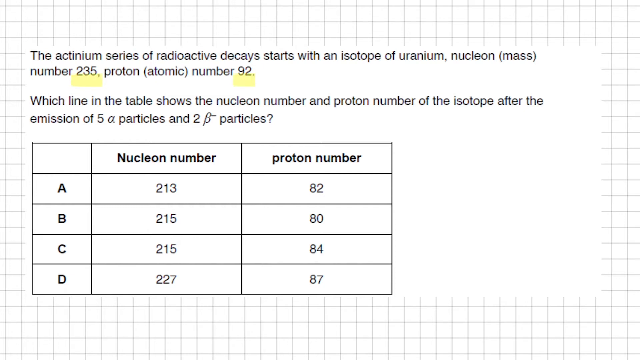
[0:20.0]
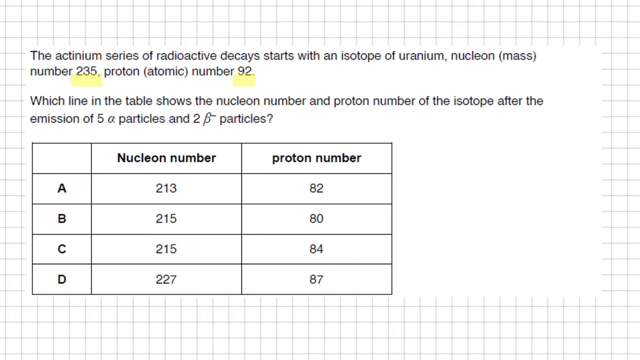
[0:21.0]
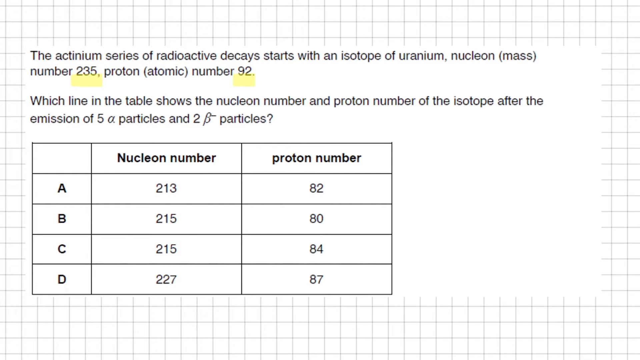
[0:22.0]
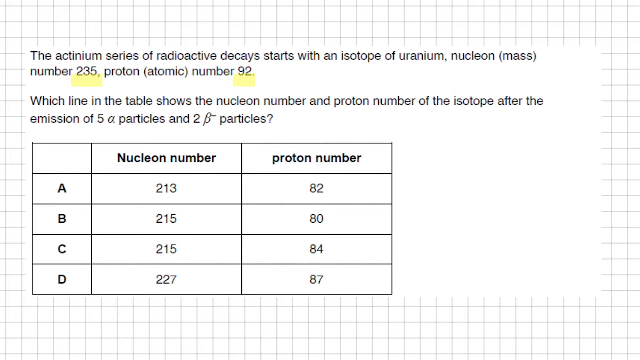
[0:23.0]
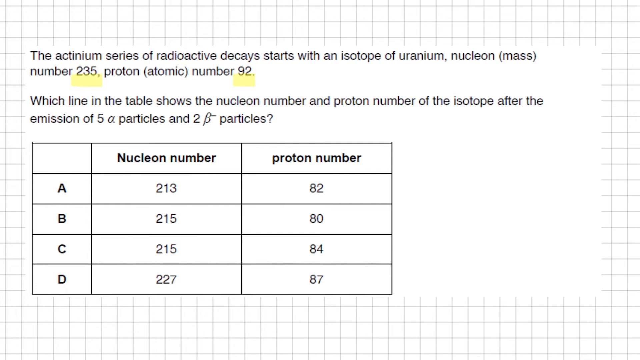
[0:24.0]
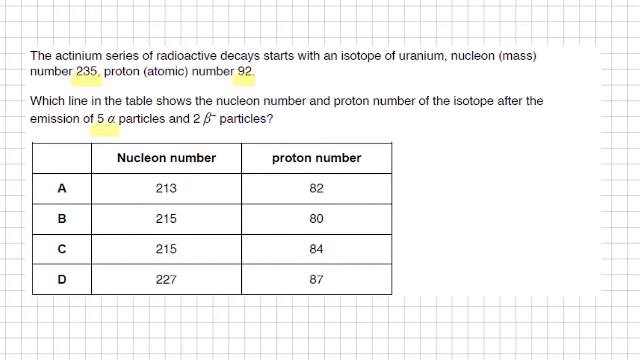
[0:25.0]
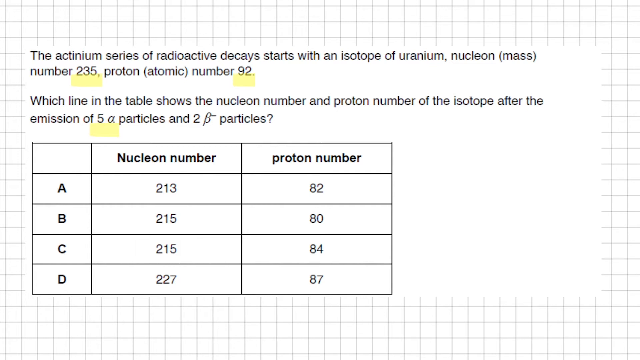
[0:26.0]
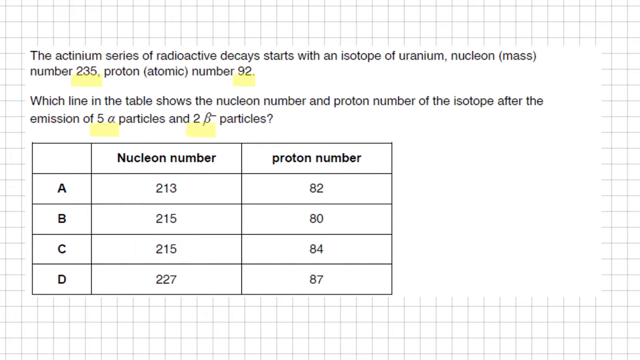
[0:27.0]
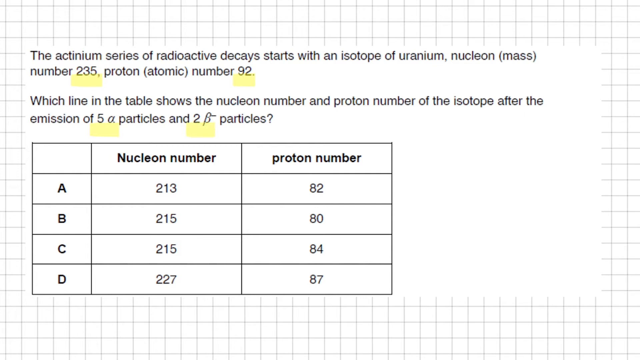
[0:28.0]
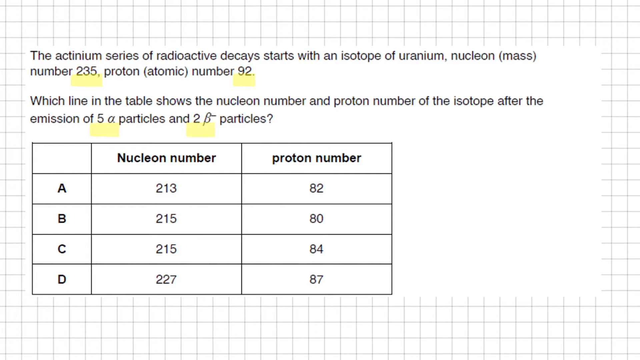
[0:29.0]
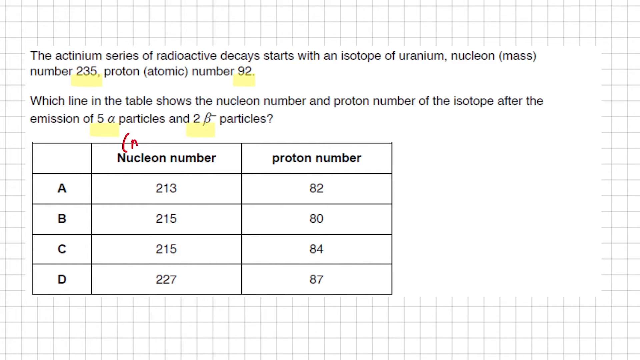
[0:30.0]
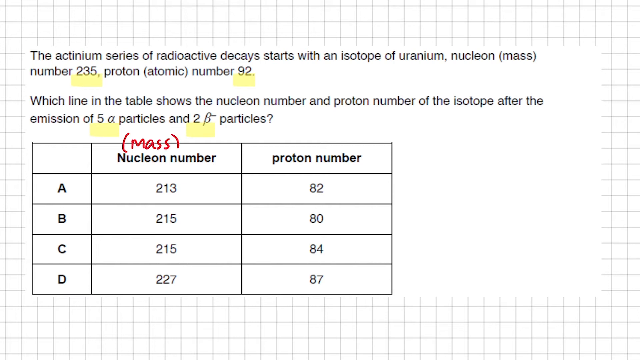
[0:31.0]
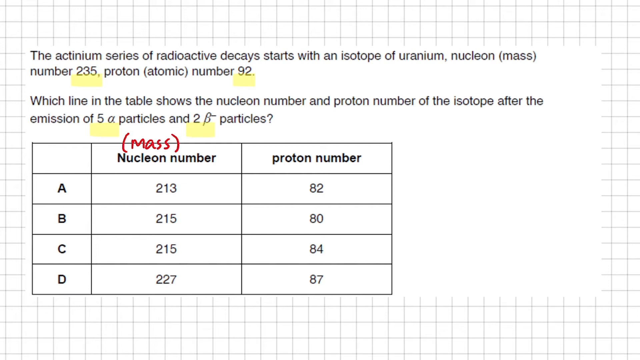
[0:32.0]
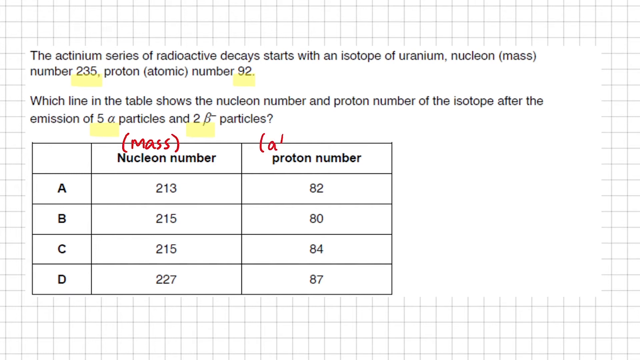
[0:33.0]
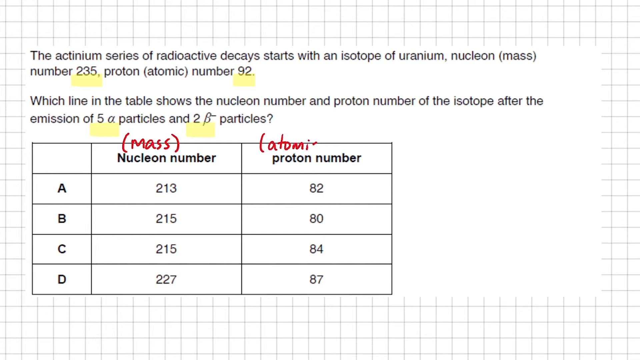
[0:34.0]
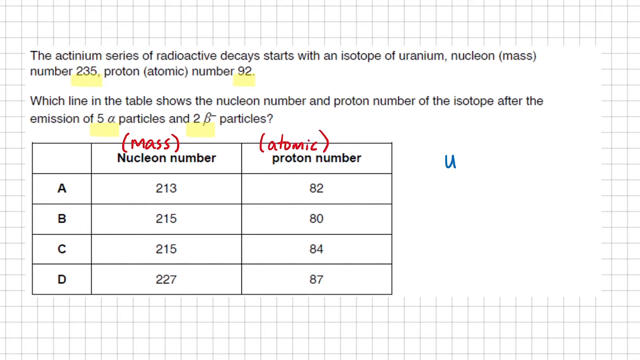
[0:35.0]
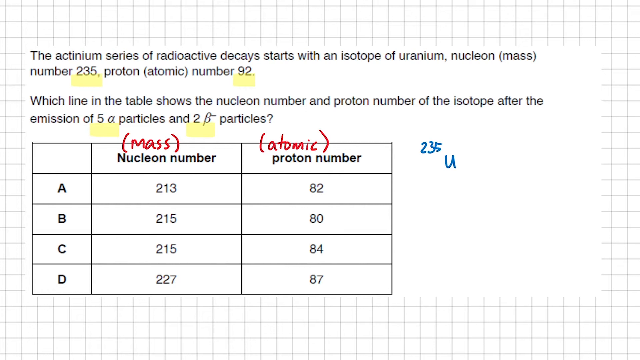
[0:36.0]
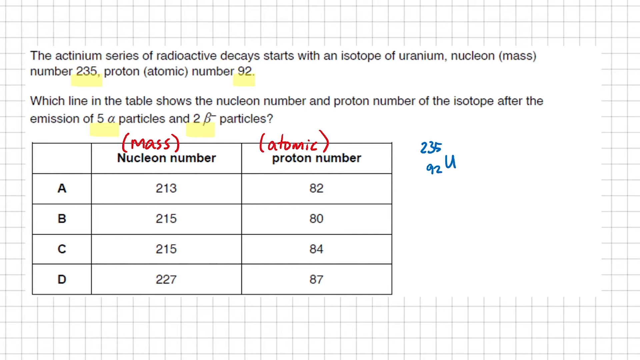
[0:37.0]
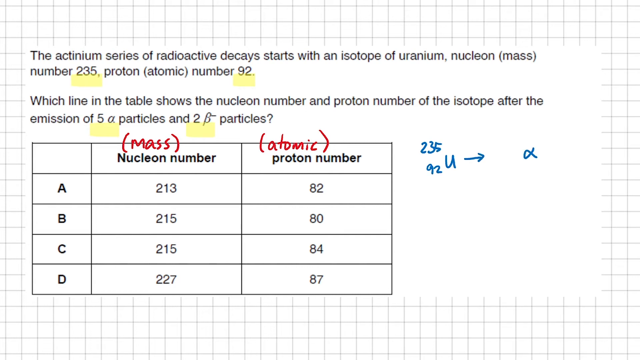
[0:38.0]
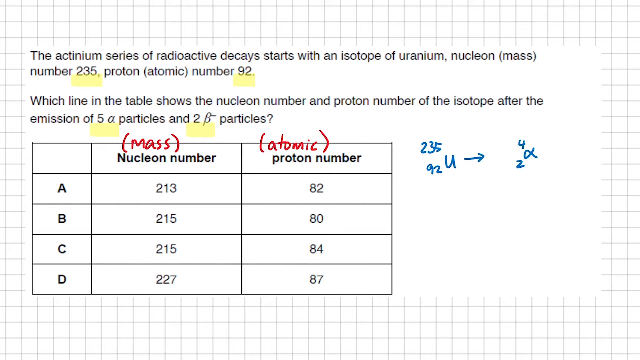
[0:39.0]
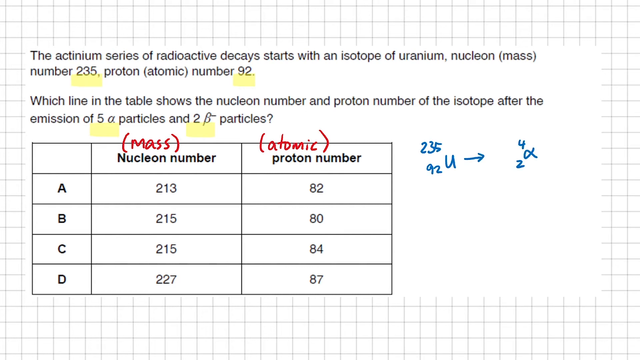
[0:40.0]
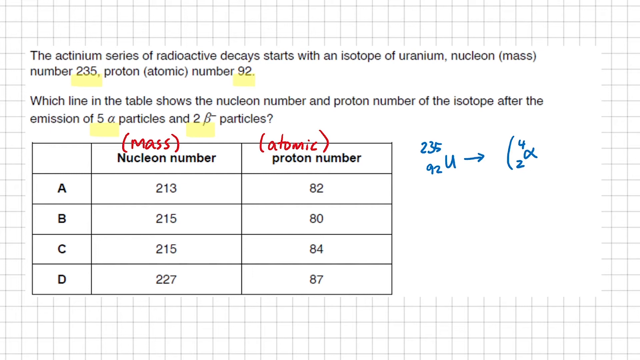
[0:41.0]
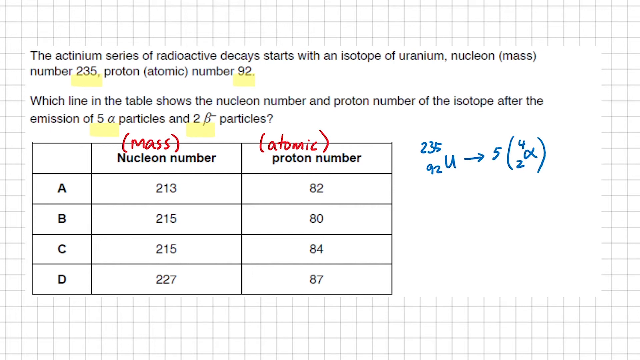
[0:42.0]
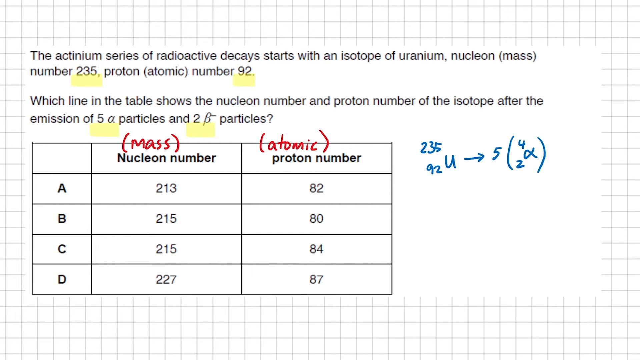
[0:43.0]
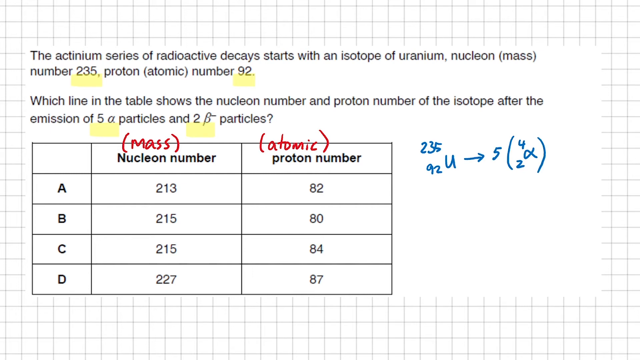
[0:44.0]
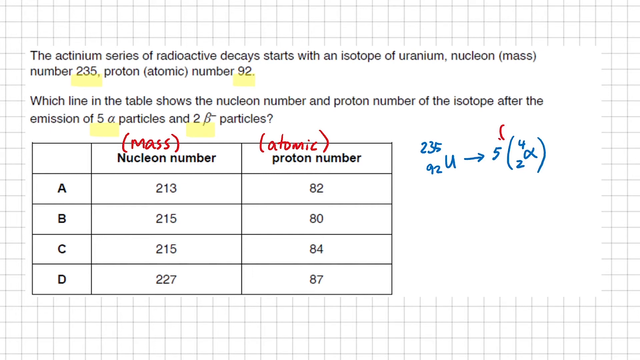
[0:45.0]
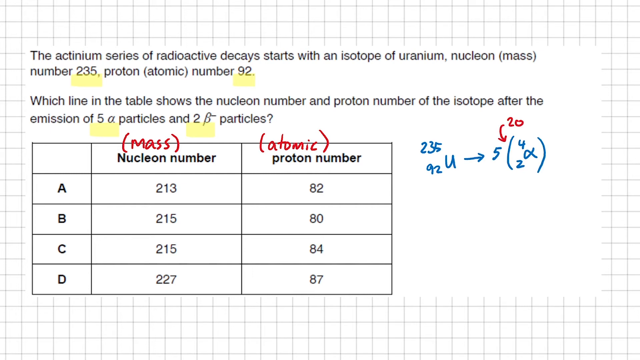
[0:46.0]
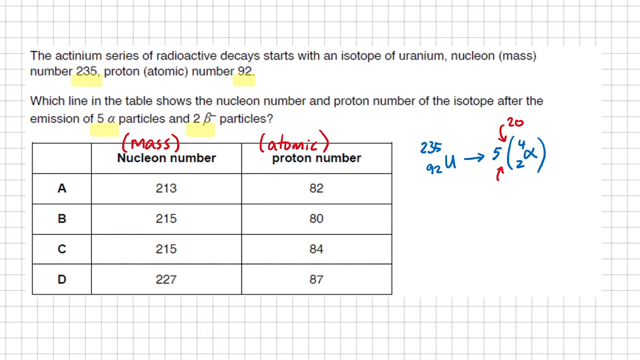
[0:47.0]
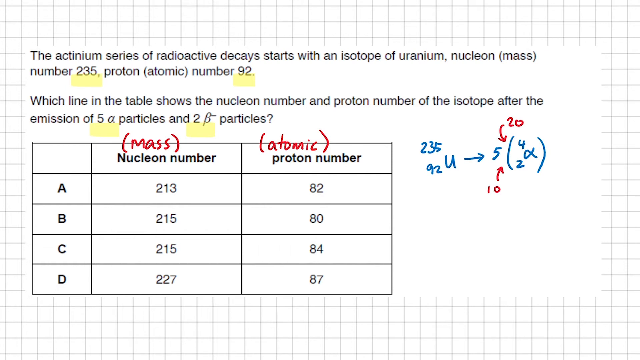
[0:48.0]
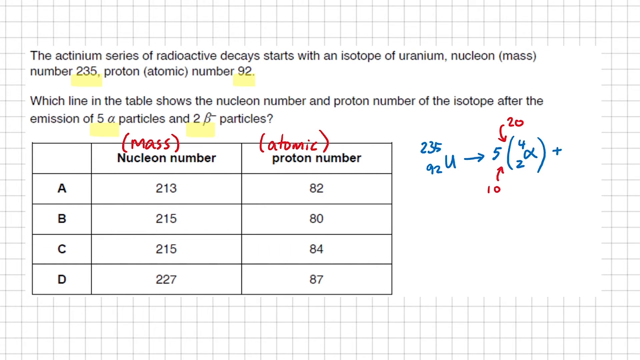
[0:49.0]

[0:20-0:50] Black-and-white striped graph paper appears on a computer background, with a solid white square in front of it holding a science question. The question gives context, including a nucleon number and a proton number, and asks which line in the table is the appropriate choice, with four options provided. The numbers 235 and 92 in the context are underlined. Two more parts of the question are then underlined, seemingly marking them as important. Above the words "nucleon number" on the table, the word "mass" is written in red marker, and above "proton number", the word "atomic" is written in red marker. In blank space to the side, 235u92 is written, followed by a formula with an arrow beside it. A small arrow seems to point to each number, providing extra context.